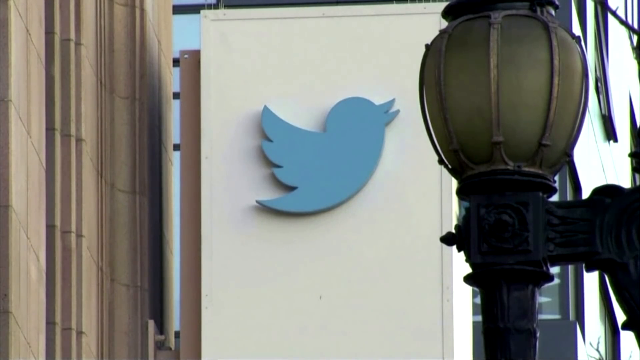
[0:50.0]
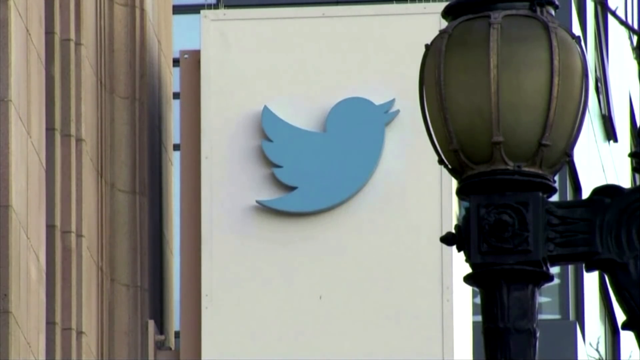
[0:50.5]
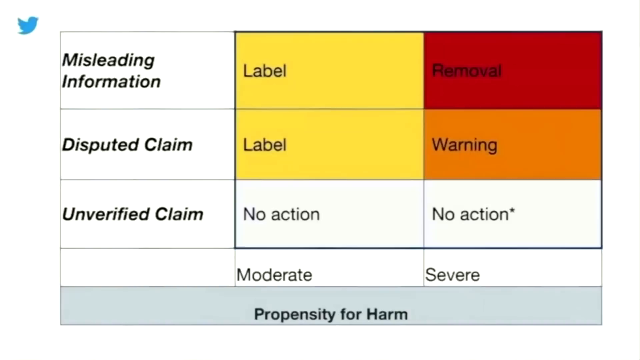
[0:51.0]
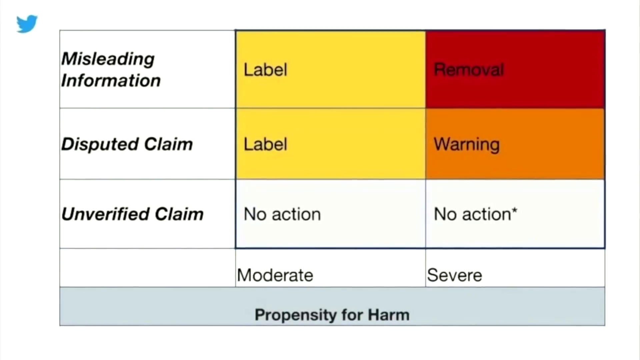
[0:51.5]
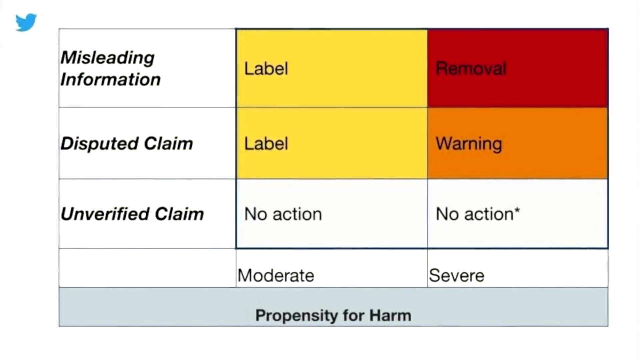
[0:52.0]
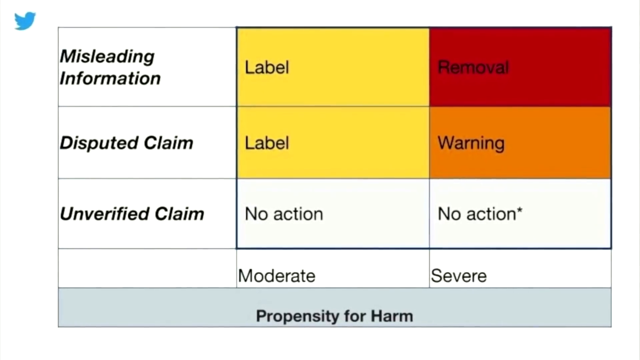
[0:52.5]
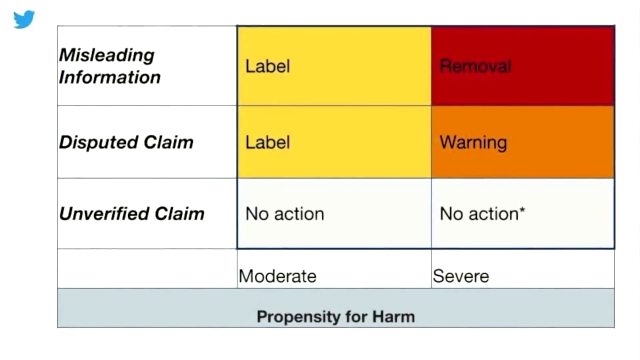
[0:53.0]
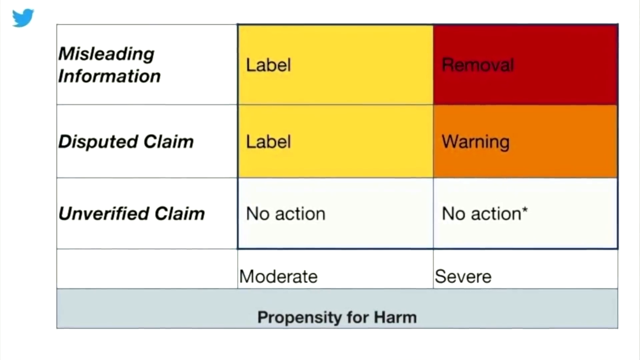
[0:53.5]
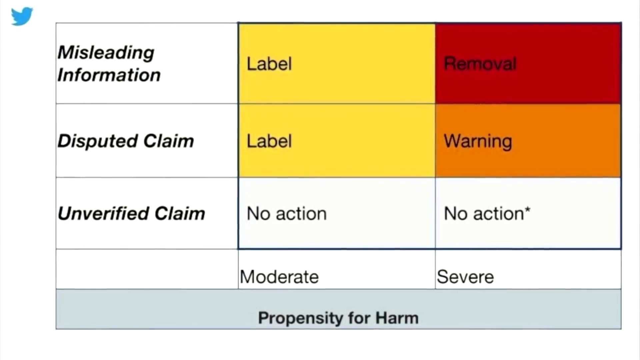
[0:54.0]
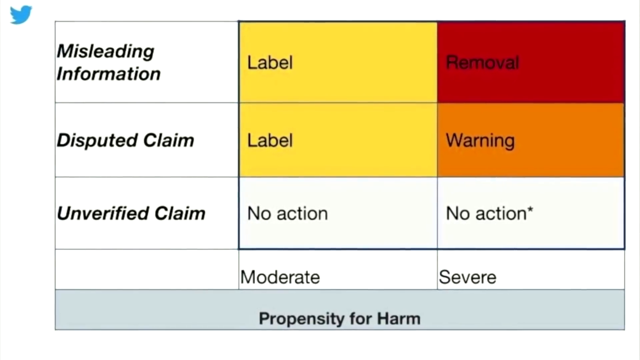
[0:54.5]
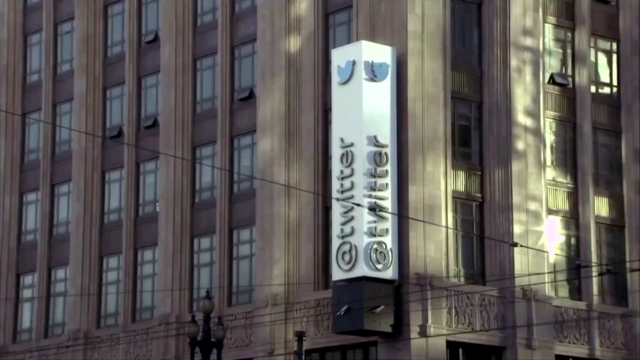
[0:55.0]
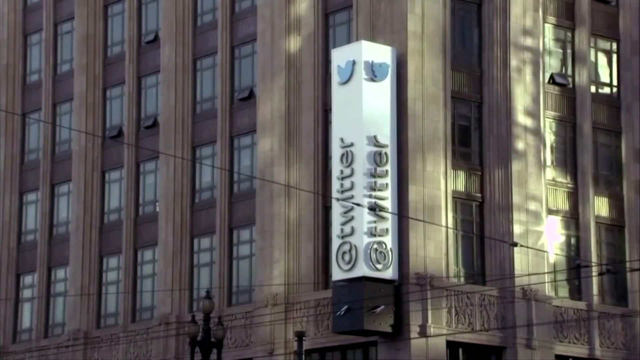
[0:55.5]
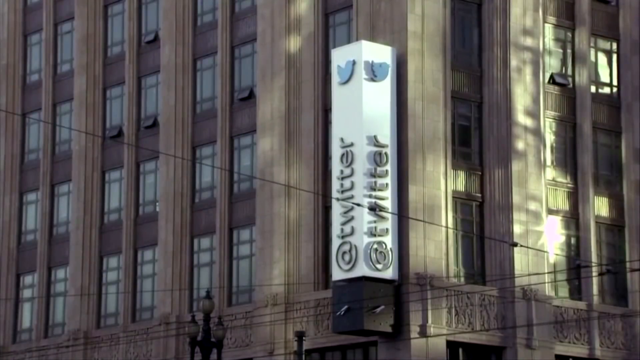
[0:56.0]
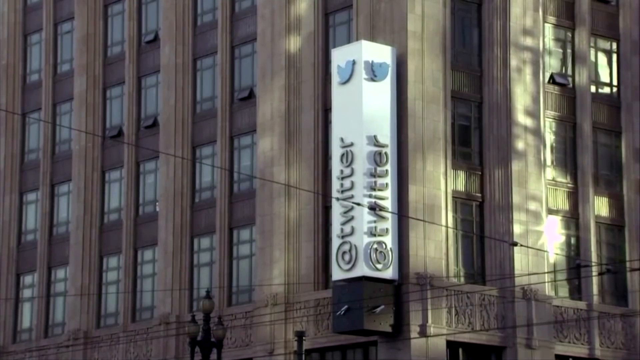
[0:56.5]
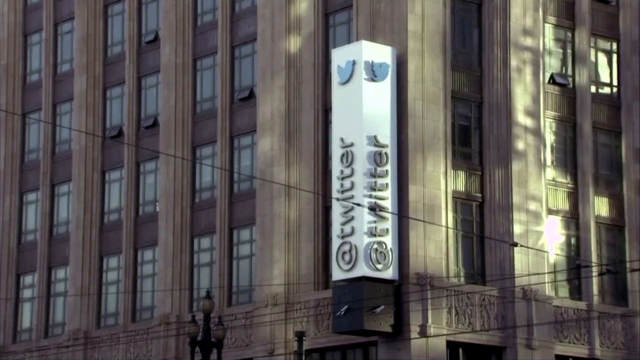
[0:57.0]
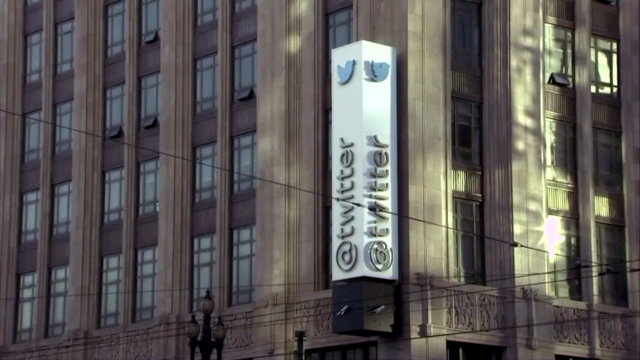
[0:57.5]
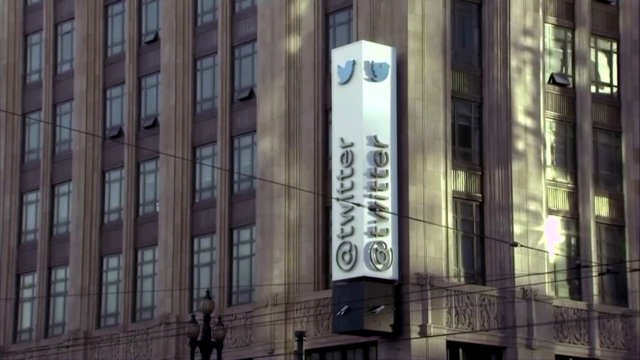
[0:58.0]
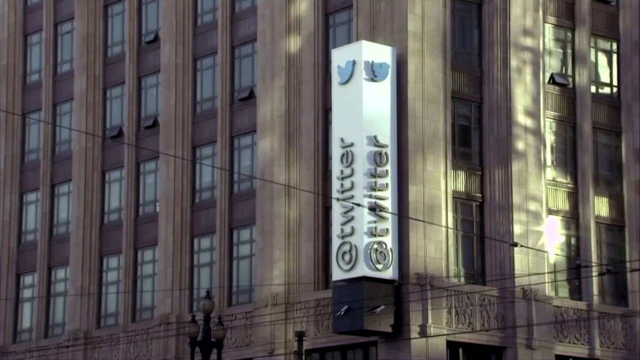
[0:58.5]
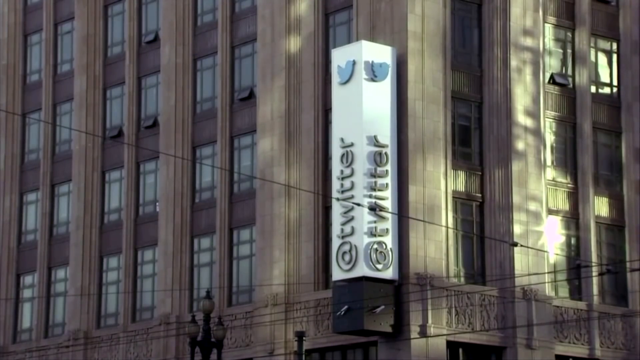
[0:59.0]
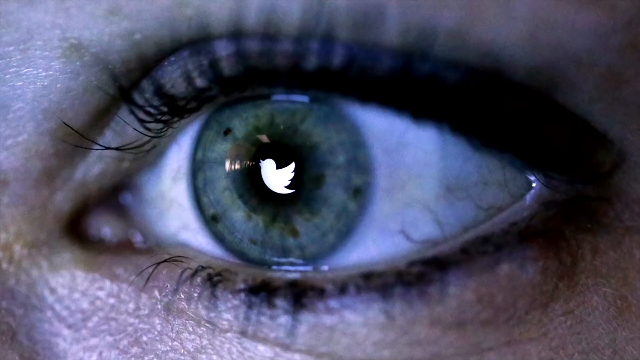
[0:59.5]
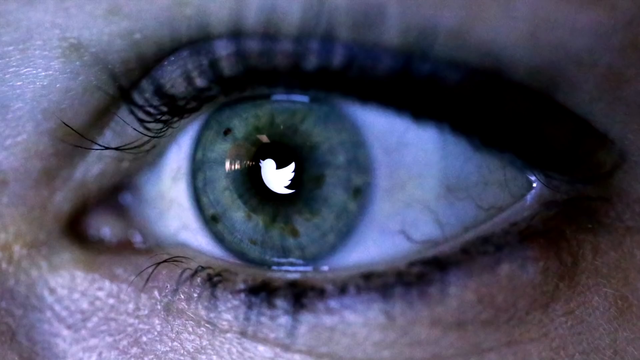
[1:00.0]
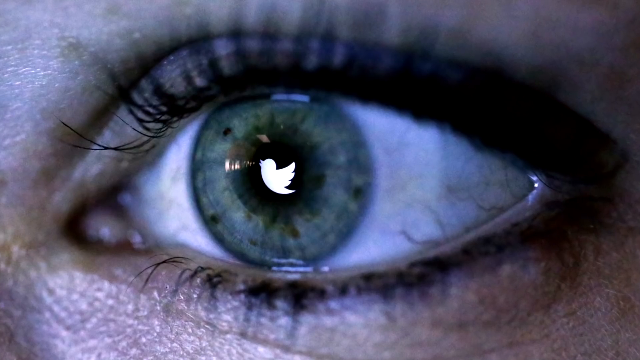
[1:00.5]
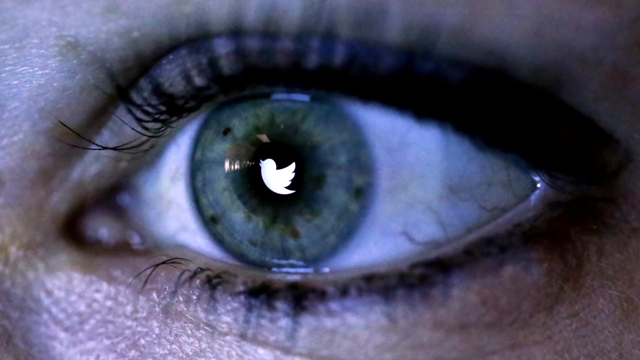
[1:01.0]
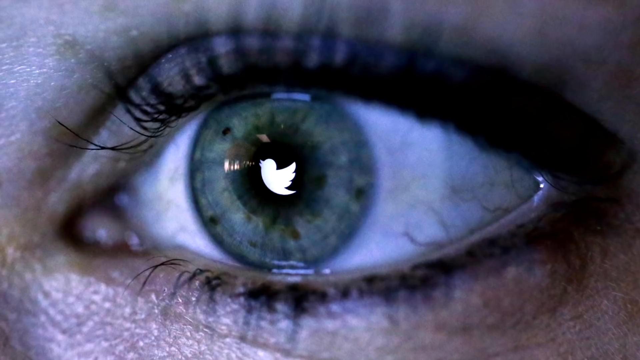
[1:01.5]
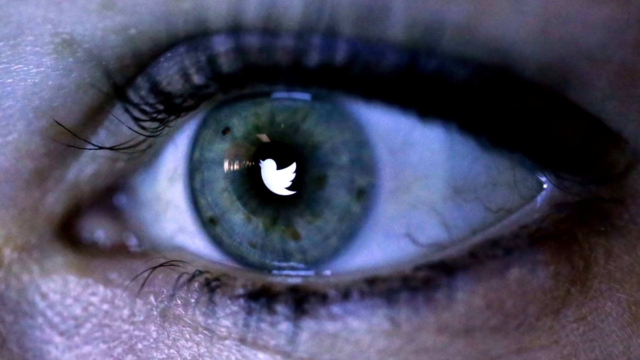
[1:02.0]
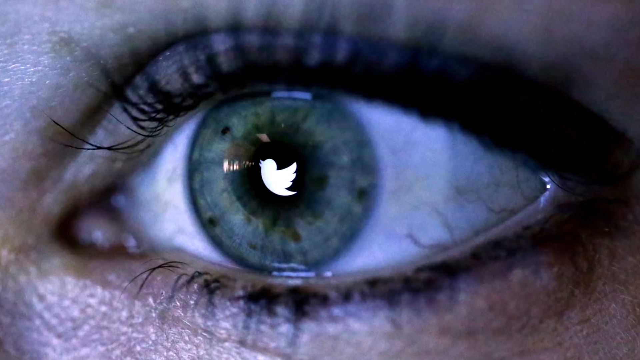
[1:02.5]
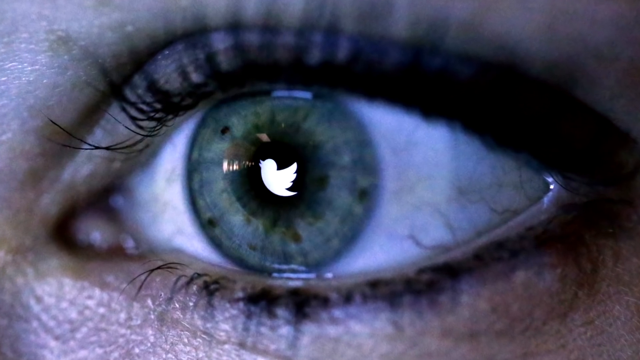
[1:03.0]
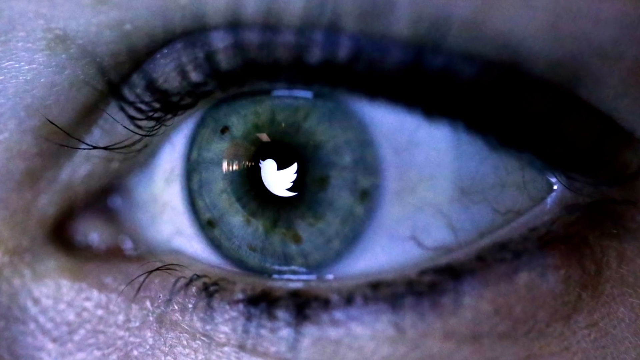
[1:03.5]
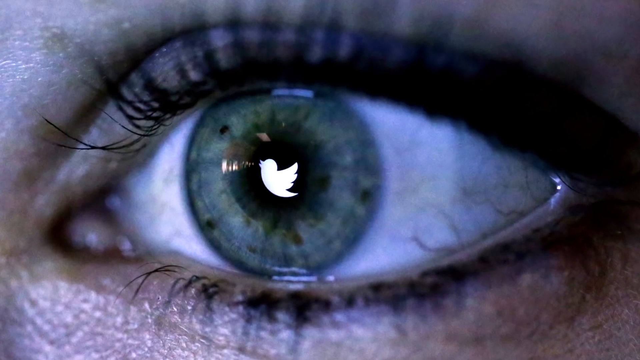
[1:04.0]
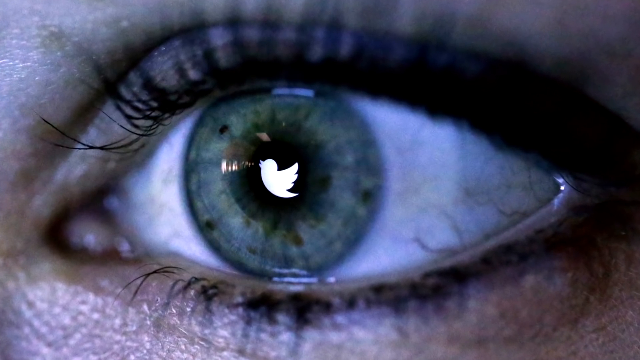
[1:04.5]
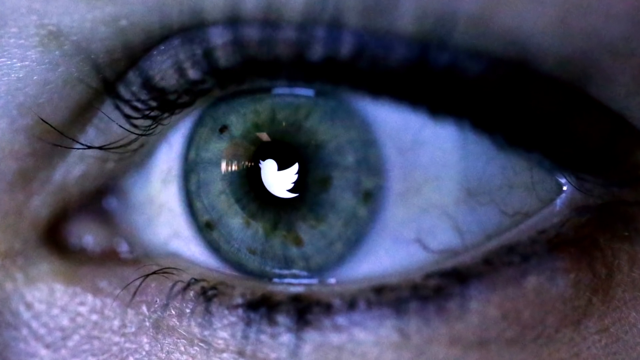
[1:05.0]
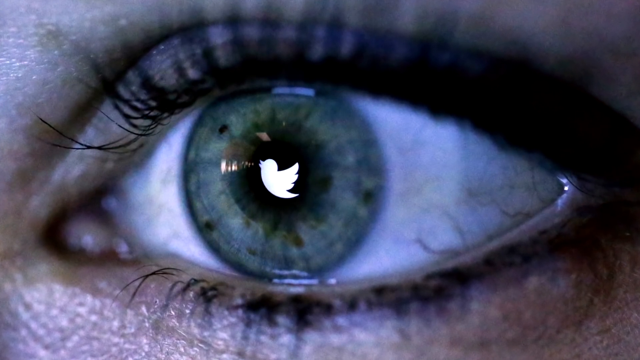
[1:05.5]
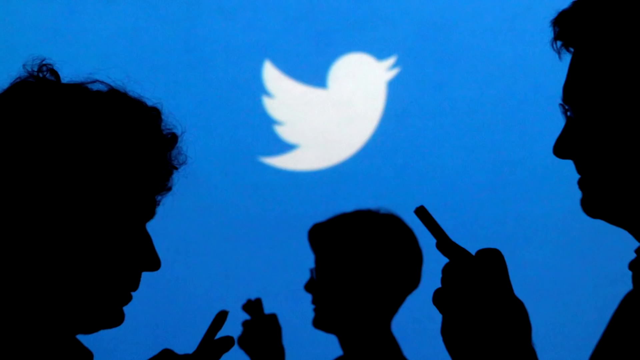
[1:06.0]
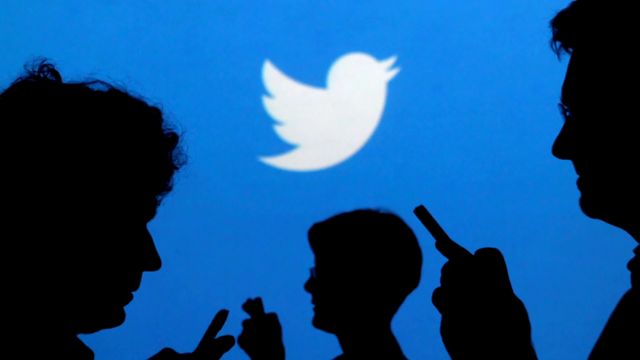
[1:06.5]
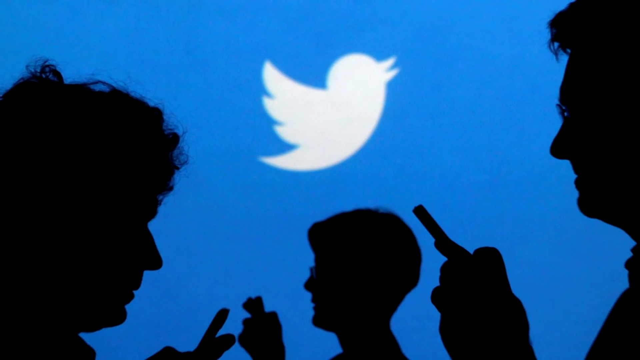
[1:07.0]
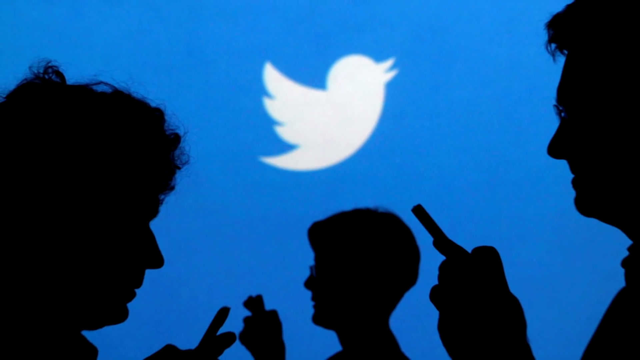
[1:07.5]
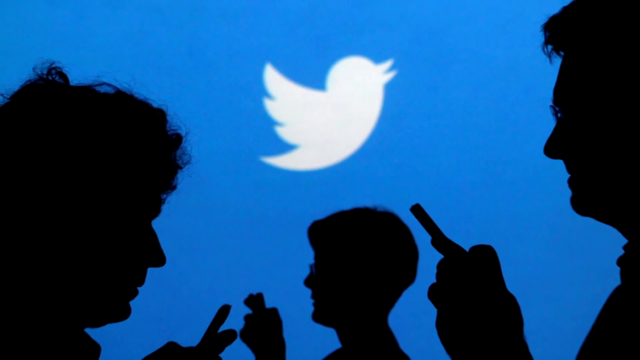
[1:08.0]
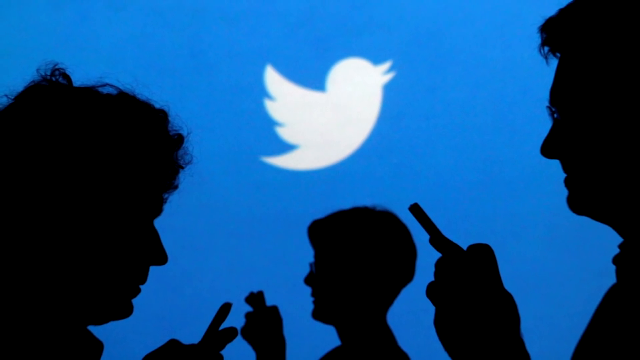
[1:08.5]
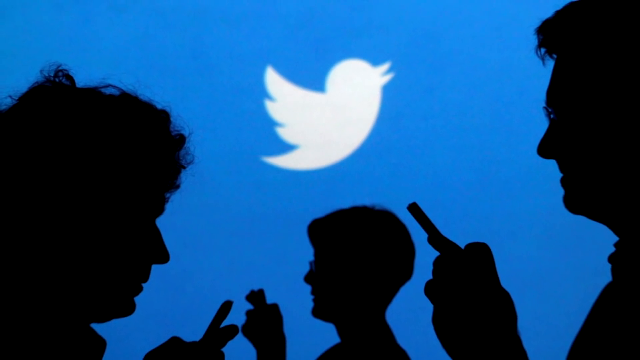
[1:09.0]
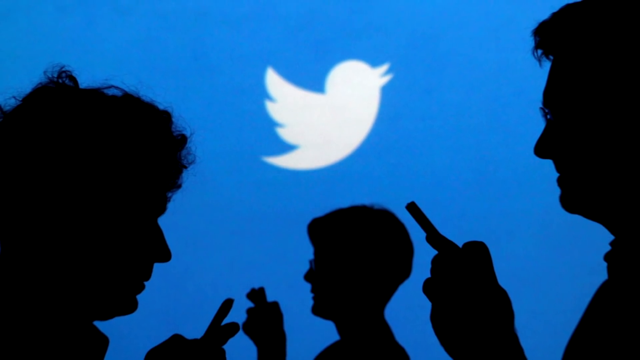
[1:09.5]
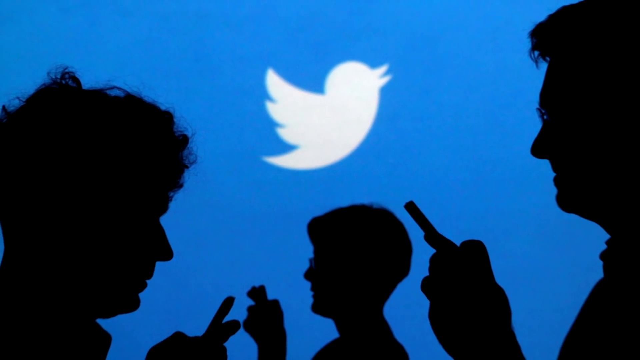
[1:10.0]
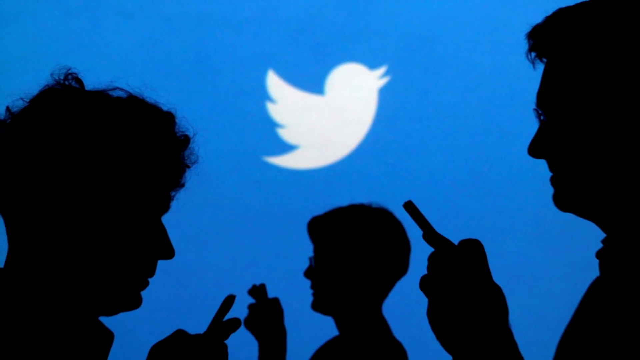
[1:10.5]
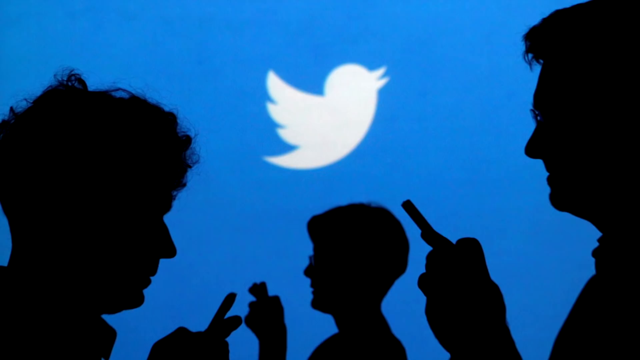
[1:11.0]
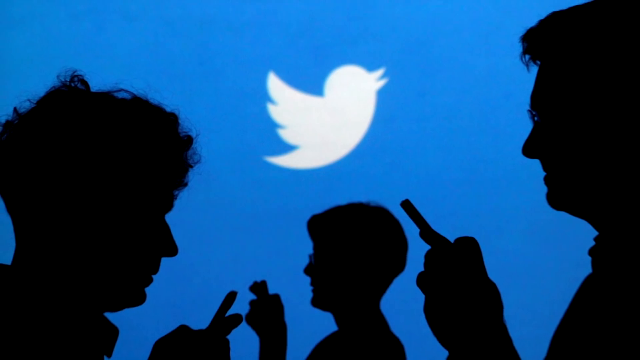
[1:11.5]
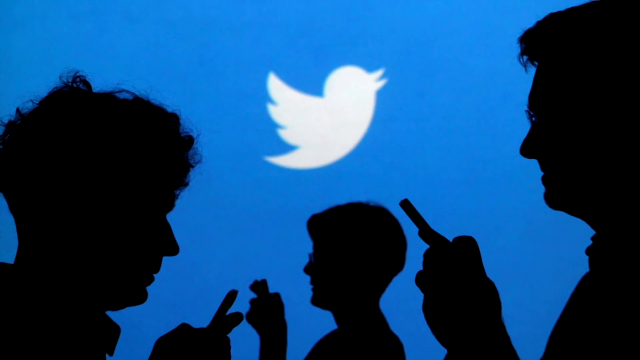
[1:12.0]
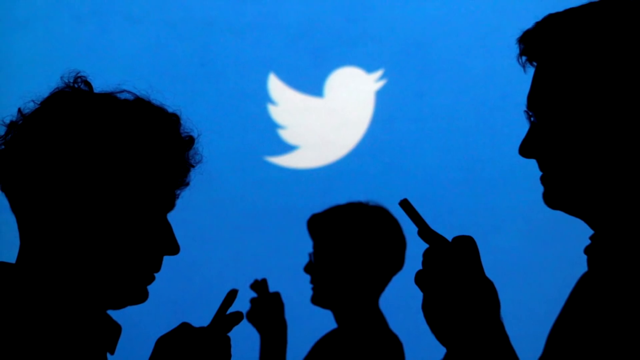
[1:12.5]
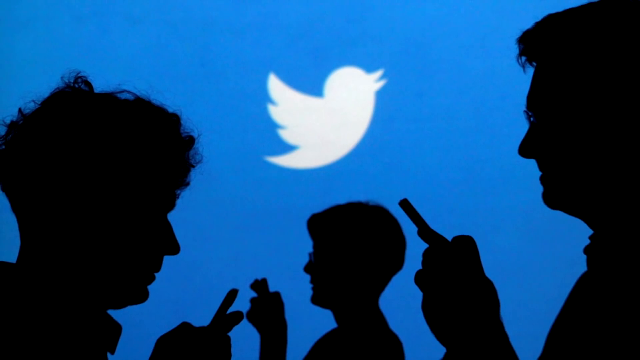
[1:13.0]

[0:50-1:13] What appears to be a door shows the blue Twitter bird displayed large in a 3D style. The same Twitter bird then appears on a chart. Along the top, from left to right, it says "misleading information", followed by a red "label" box and a red "removal". The next row says "disputed claim", with a yellow "label" and an orange "warning". The bottom row says "unverified claim", with white "no action" and white "no action". At the bottom of the center column it says "moderate", and in the right column it says "severe". At the very bottom, "propensity for harm" appears in bold black letters.